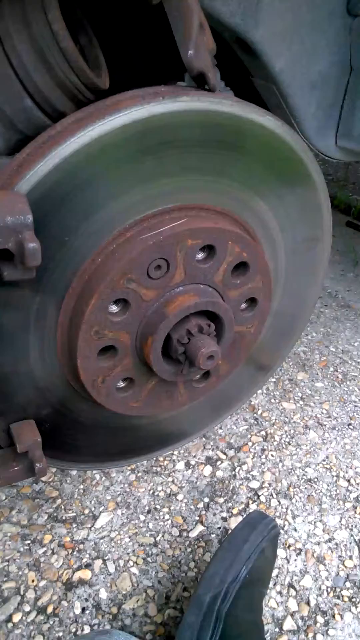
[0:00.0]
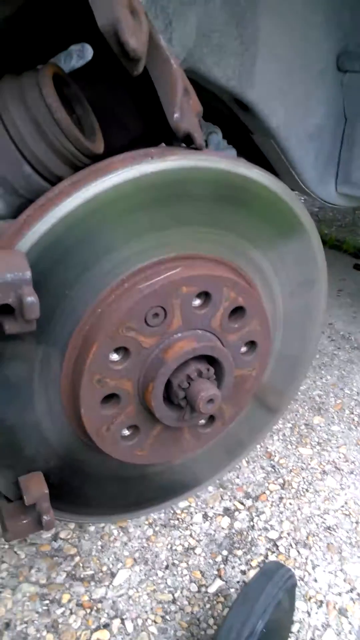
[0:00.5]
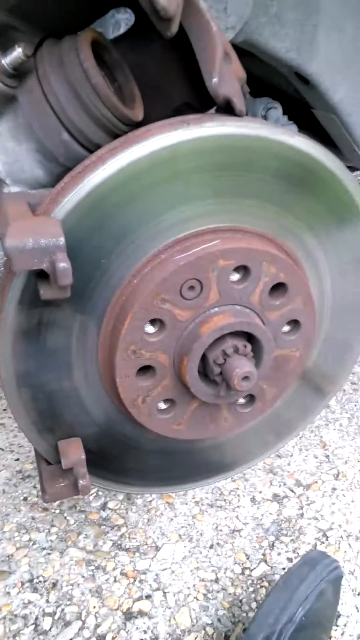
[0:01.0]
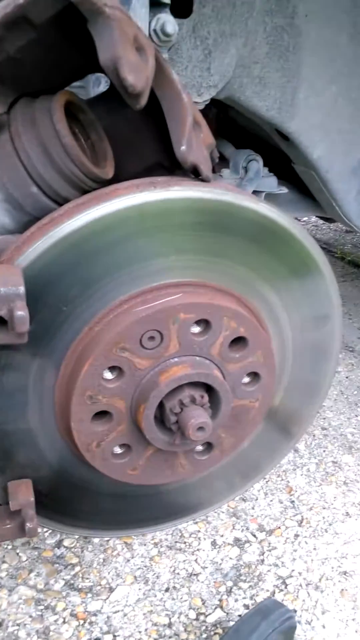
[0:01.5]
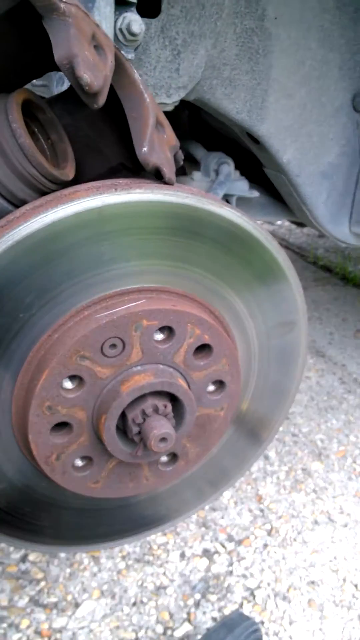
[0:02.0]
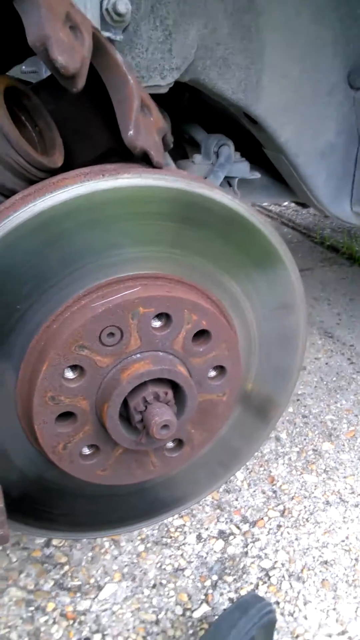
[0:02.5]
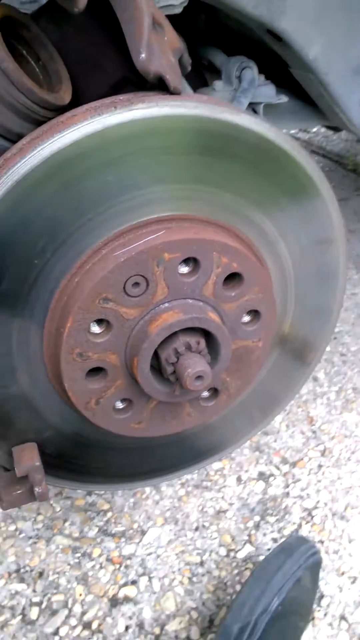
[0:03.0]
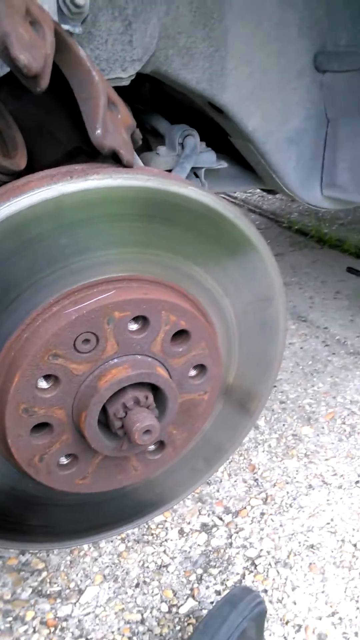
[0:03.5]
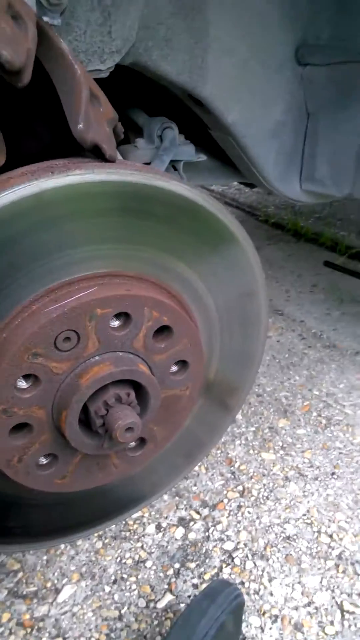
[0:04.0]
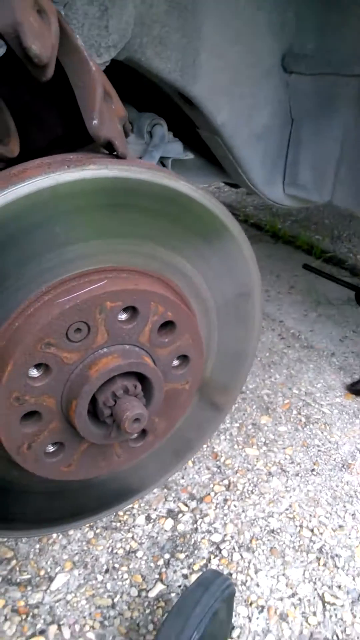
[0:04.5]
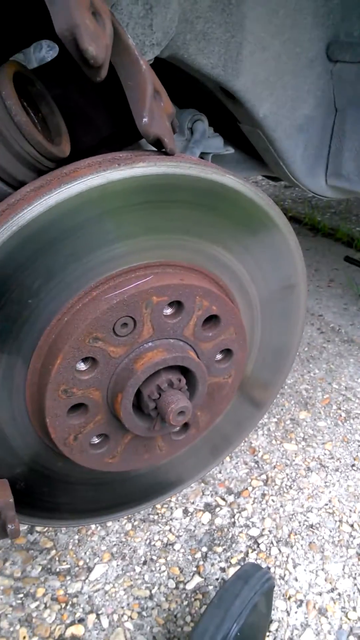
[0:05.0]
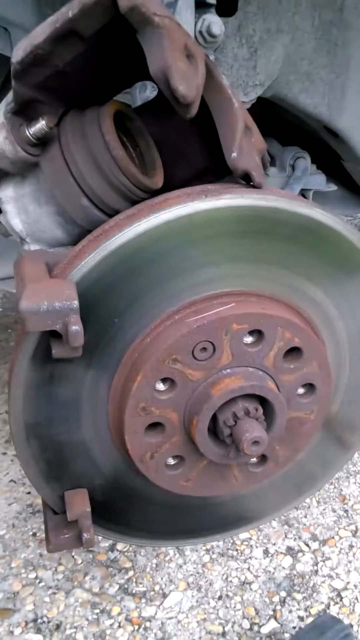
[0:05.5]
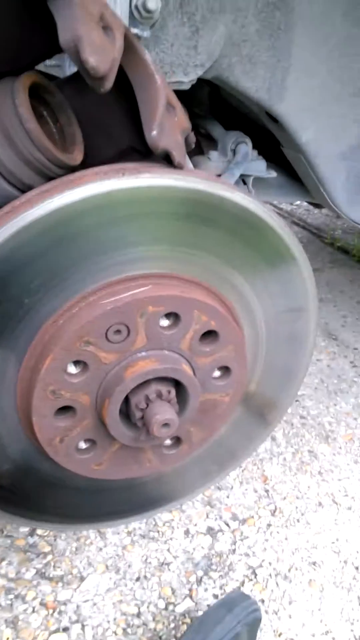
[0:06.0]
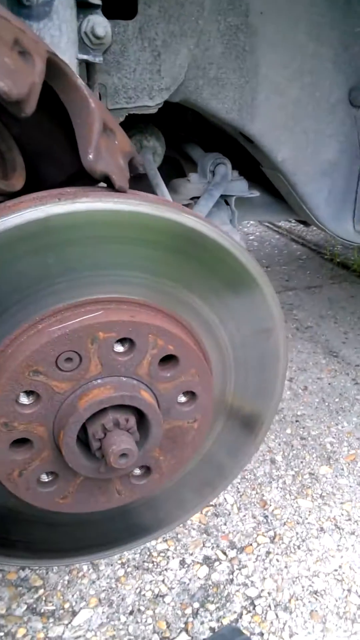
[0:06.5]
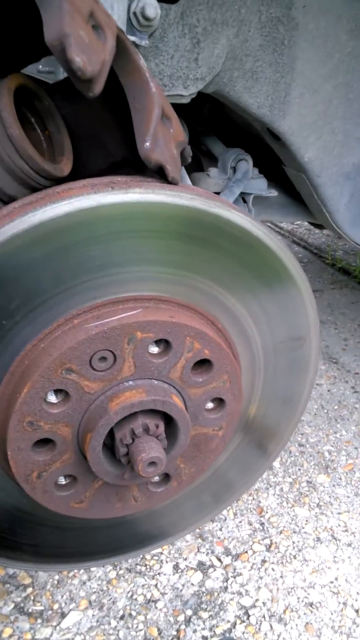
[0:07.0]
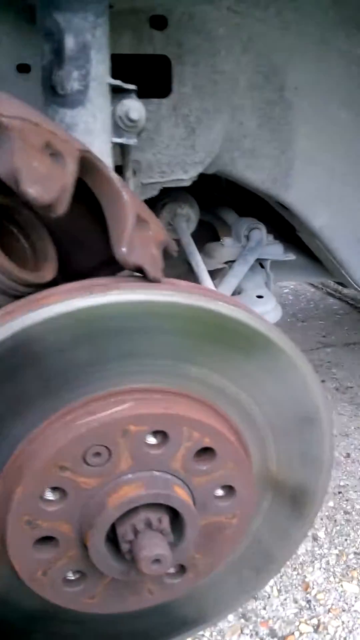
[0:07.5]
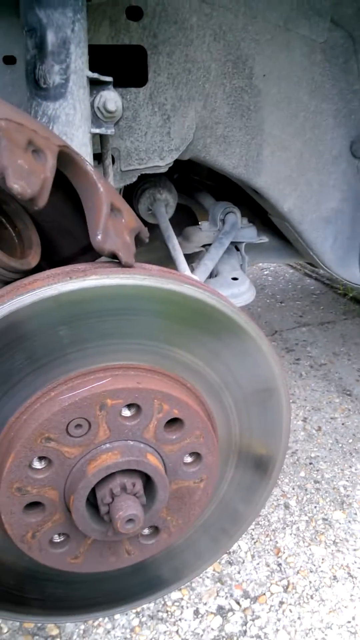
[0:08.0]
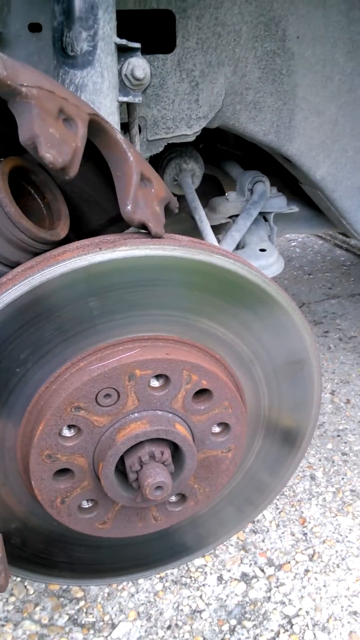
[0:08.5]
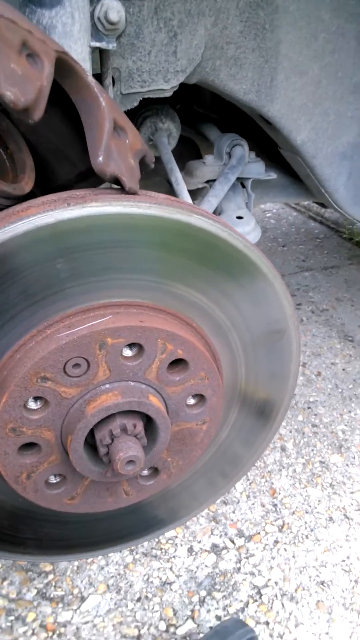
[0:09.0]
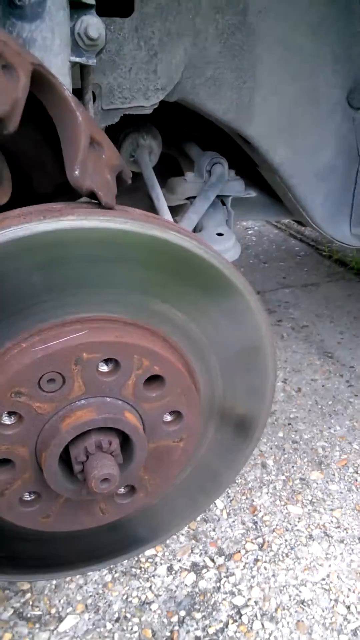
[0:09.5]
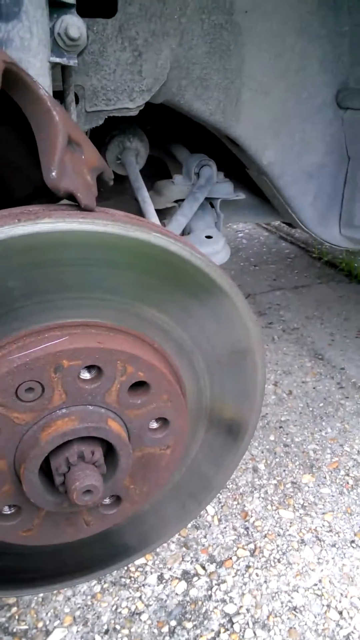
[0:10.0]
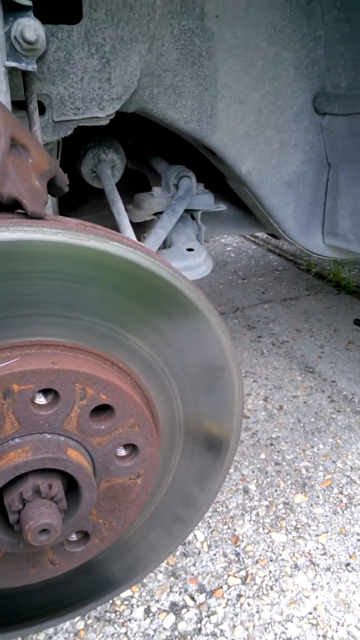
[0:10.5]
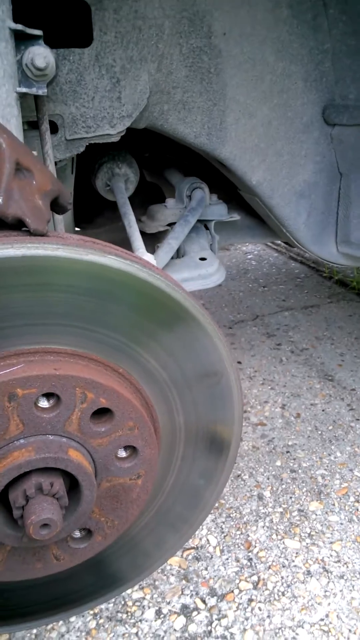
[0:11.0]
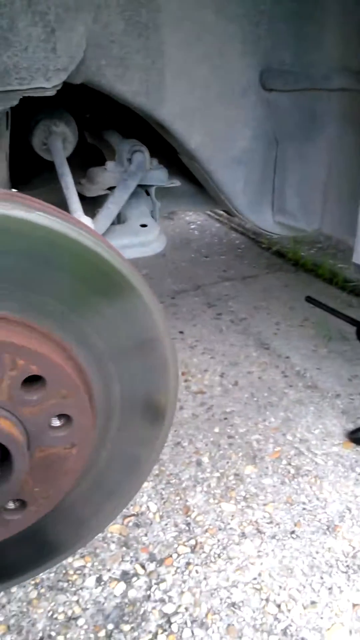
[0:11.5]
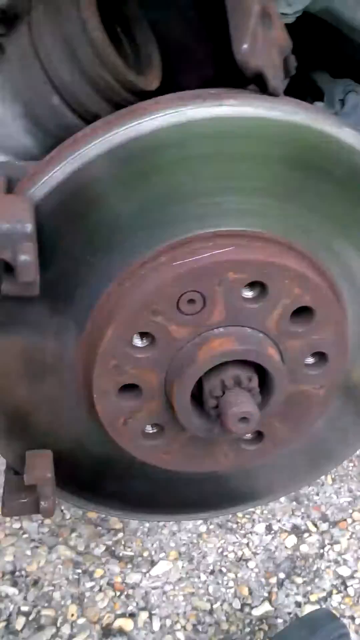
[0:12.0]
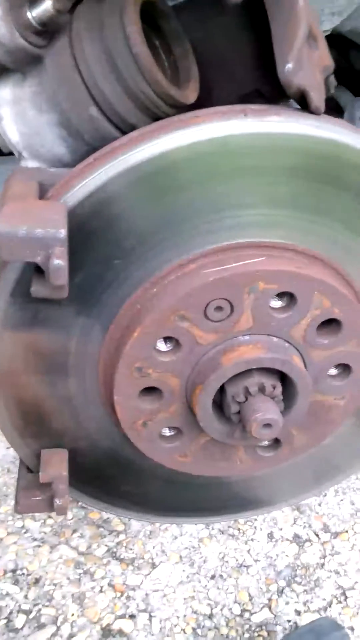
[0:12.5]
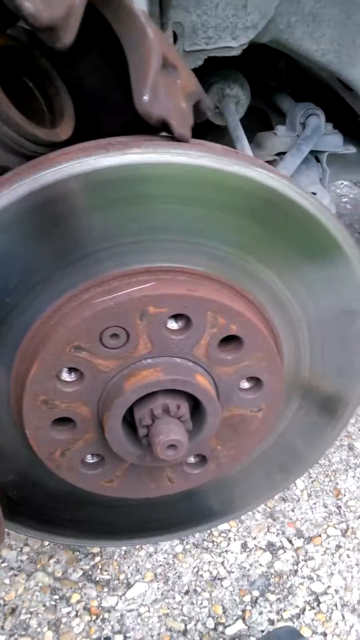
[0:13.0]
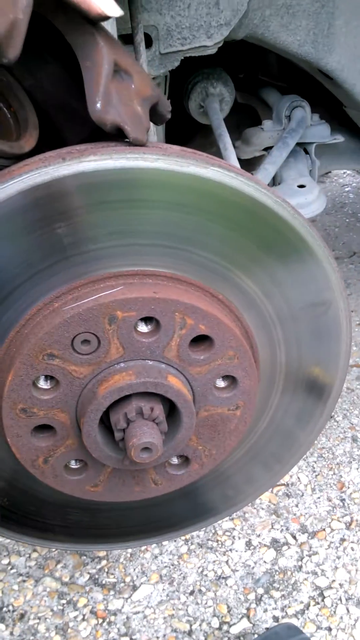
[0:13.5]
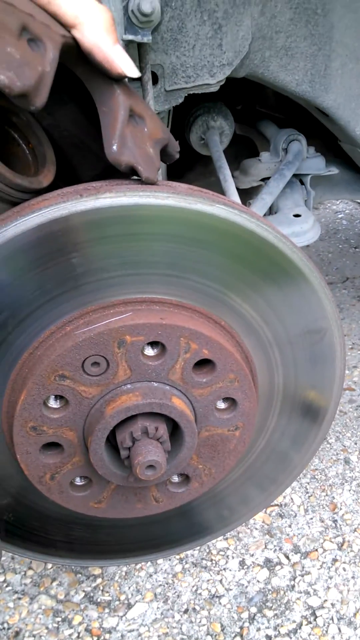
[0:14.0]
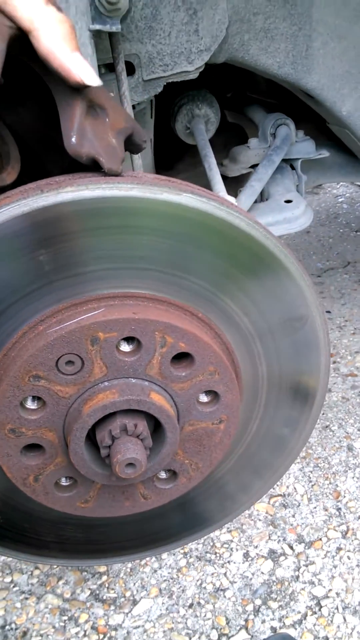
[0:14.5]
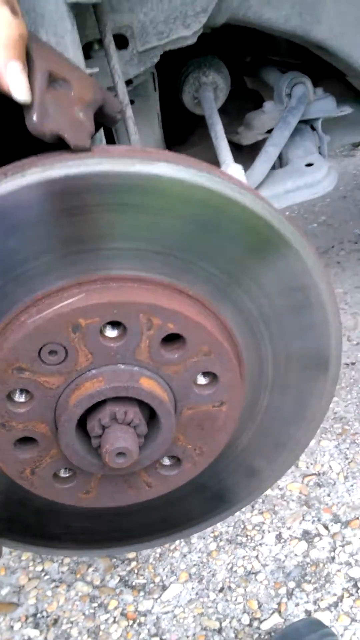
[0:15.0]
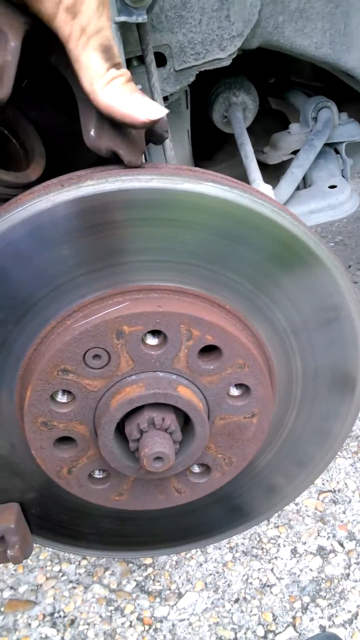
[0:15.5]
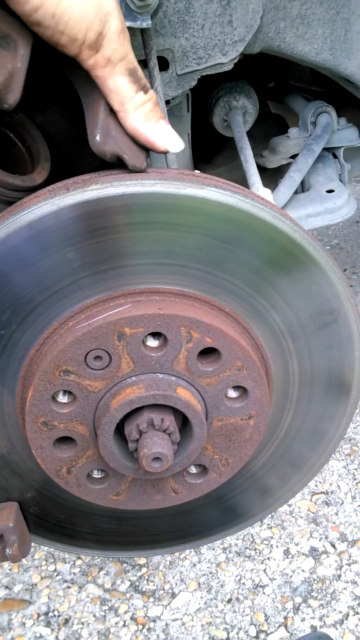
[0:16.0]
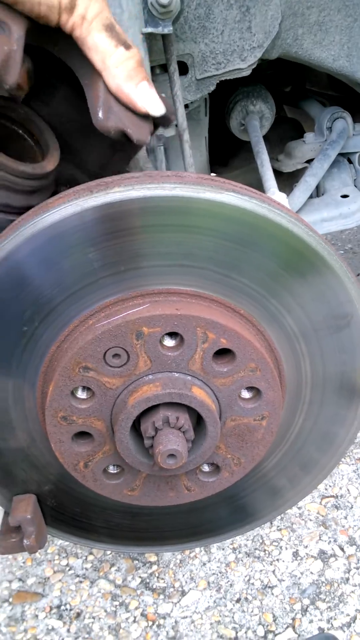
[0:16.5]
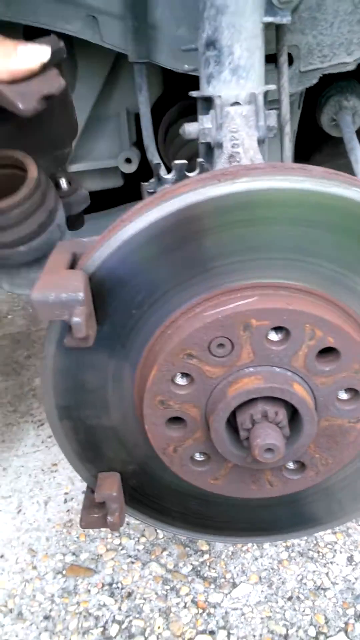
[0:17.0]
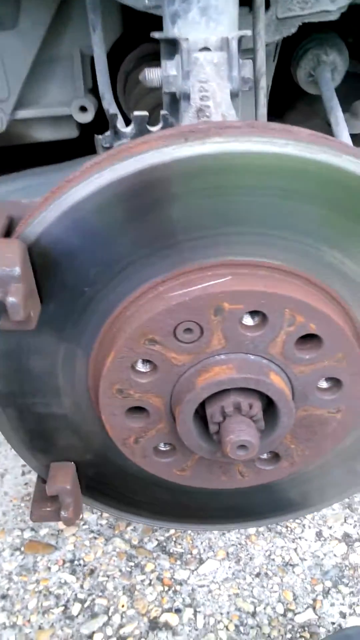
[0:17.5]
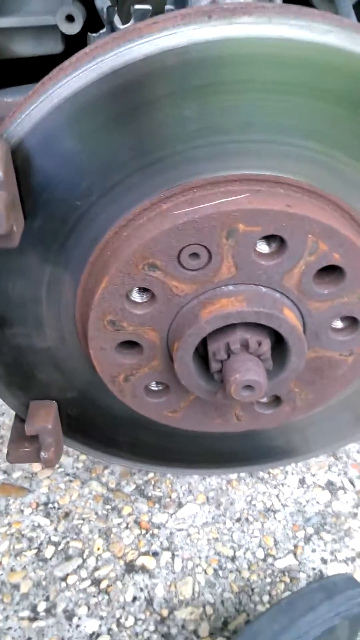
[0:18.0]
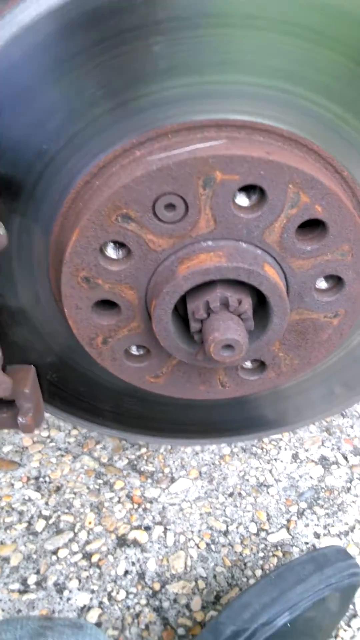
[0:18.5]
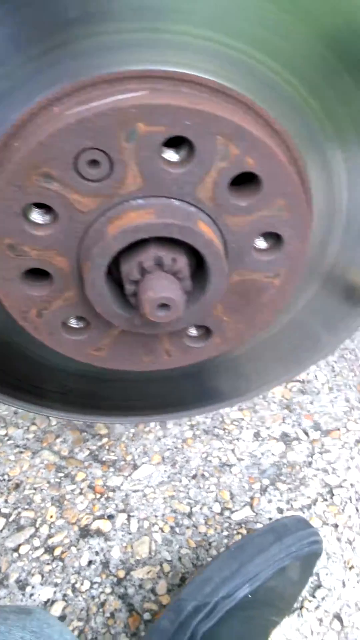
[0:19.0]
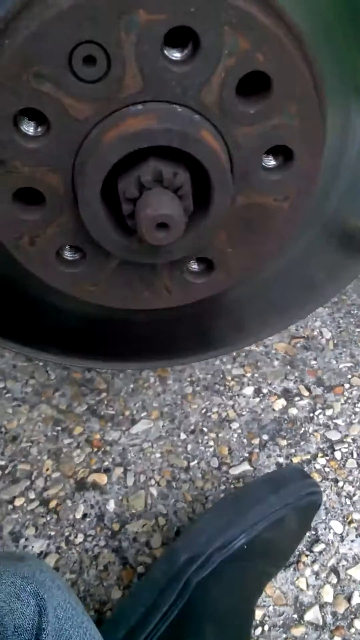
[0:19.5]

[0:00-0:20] A close-up shows a car part that looks like a big metal disc, perhaps part of a wheel. The footage is very shaky and is obviously filmed on a mobile phone held in someone's hand, kept on this kind of silver disc with rustier metal bits sticking out of it where the nuts and bolts go, possibly where the wheel attaches. Only the man's foot is visible; he appears to be sat cross-legged on the floor next to the metal disc he is showing. The outer edge of the disc is like a brushed silver, while the raised inner part, which has lots of holes where the bolts go in to hold the wheel on, is a red rusty colour. Some other bodywork of a vehicle is in the background, but the piece of metal doesn't appear to be attached to any of it; it is just propped alongside it, and the man is sat on the floor.